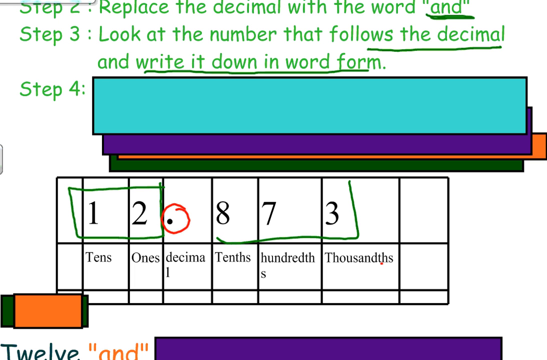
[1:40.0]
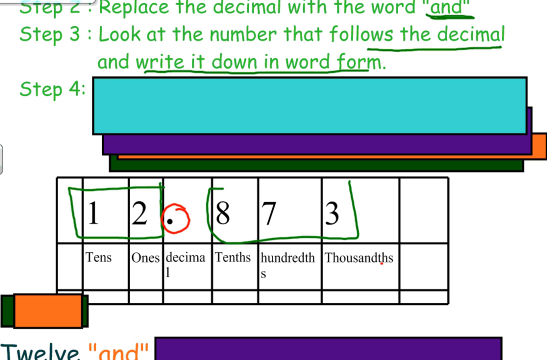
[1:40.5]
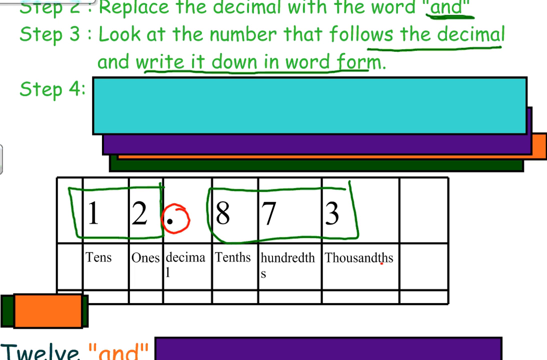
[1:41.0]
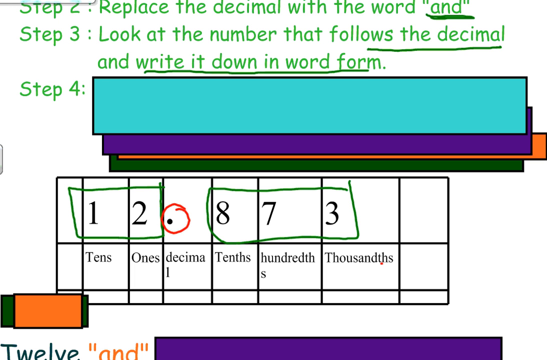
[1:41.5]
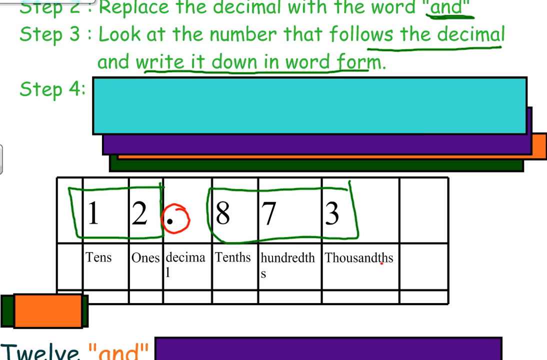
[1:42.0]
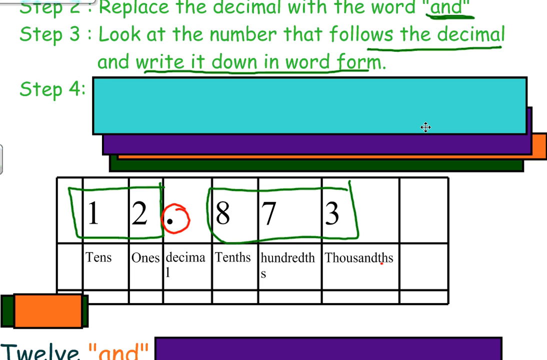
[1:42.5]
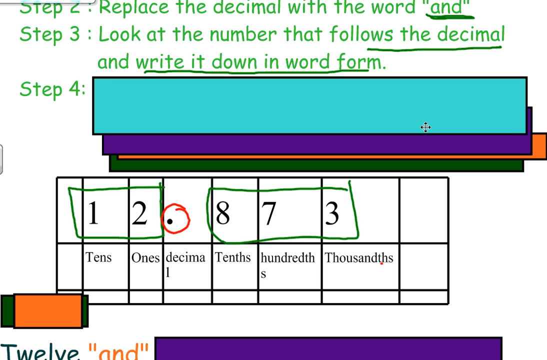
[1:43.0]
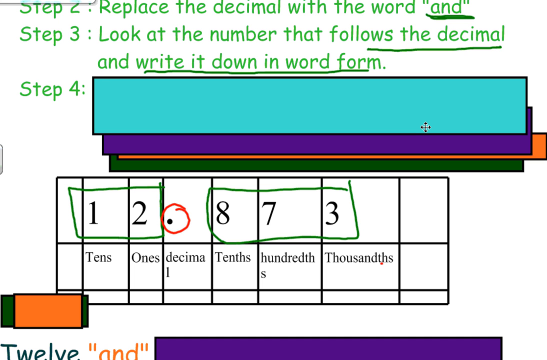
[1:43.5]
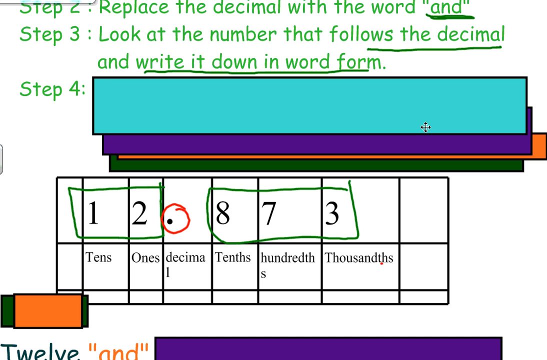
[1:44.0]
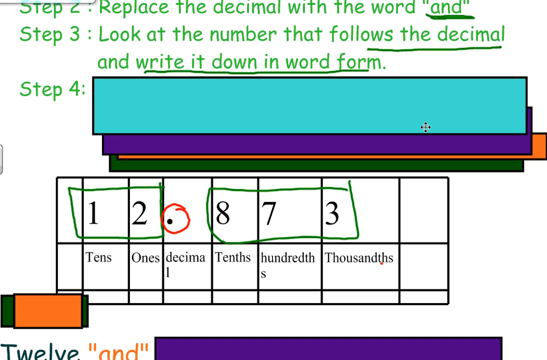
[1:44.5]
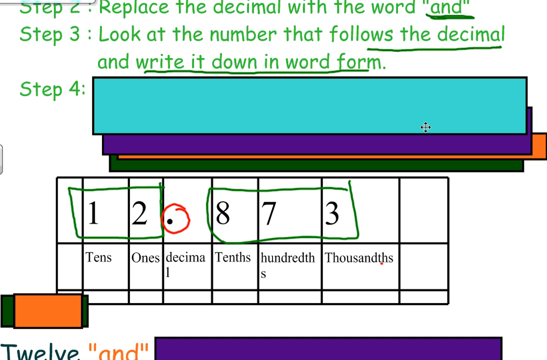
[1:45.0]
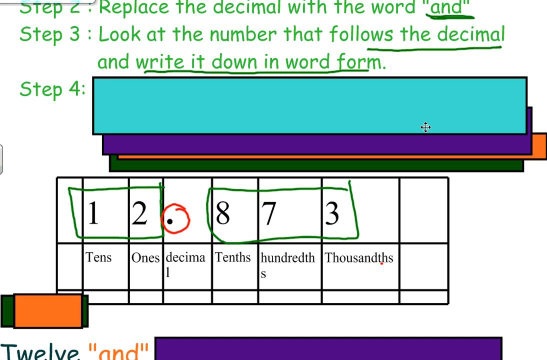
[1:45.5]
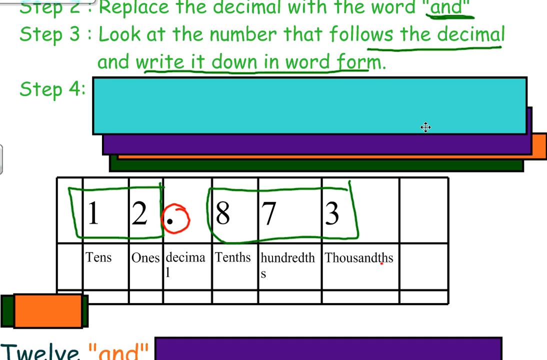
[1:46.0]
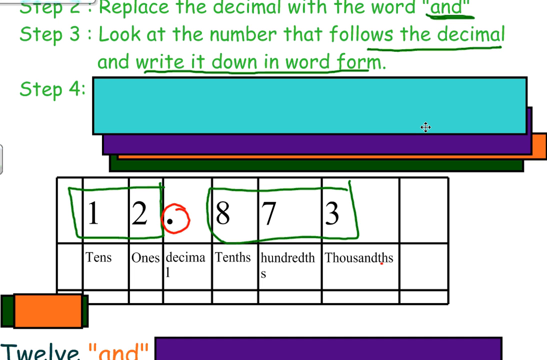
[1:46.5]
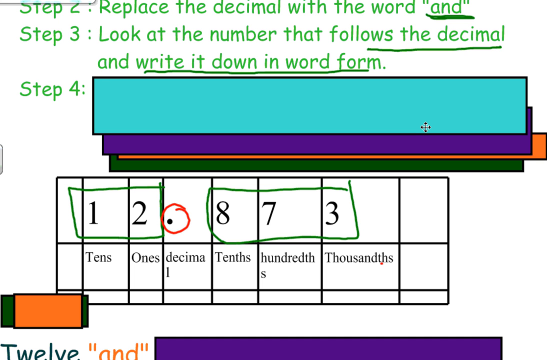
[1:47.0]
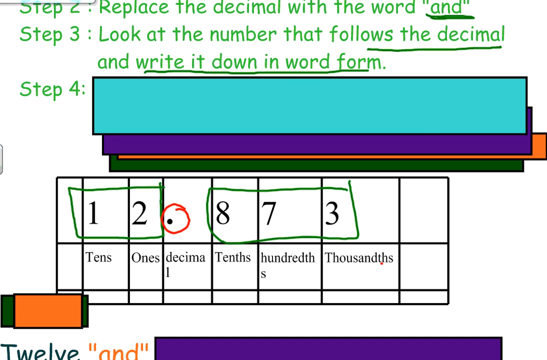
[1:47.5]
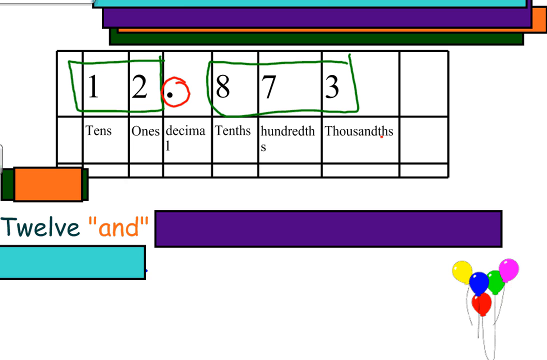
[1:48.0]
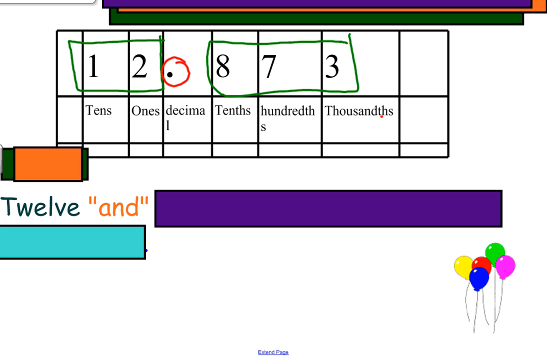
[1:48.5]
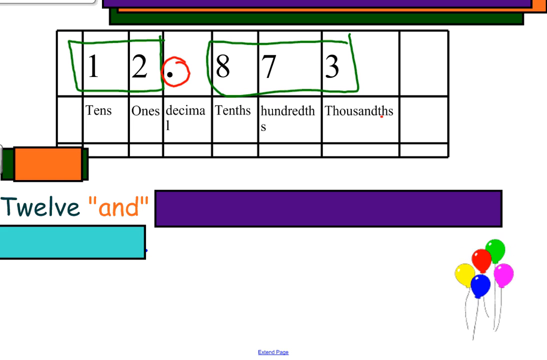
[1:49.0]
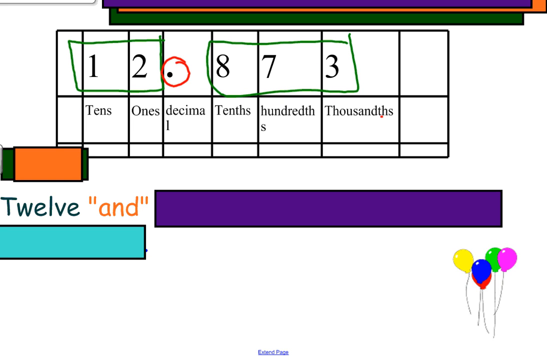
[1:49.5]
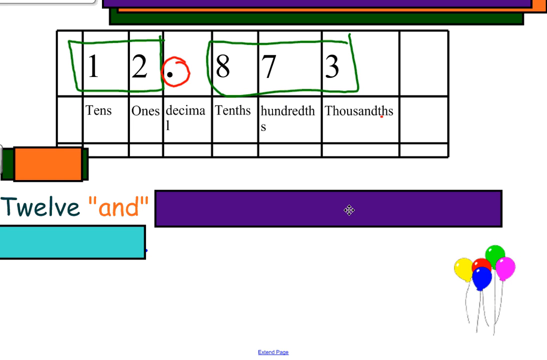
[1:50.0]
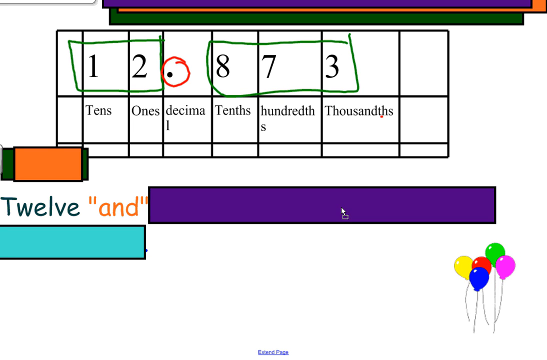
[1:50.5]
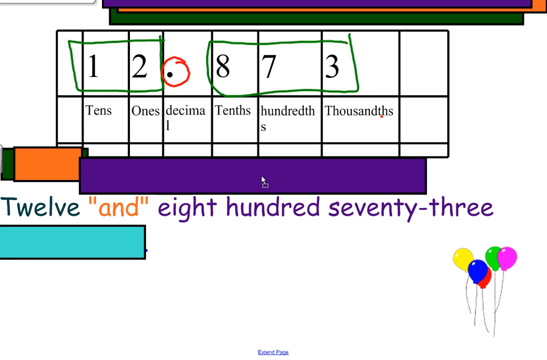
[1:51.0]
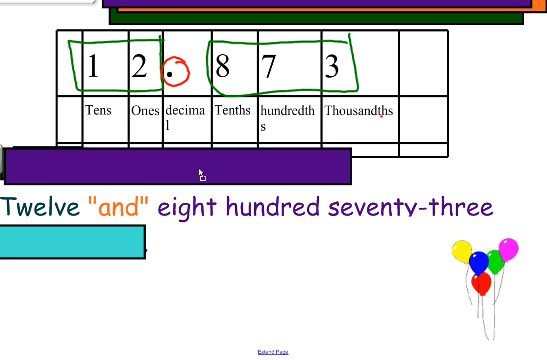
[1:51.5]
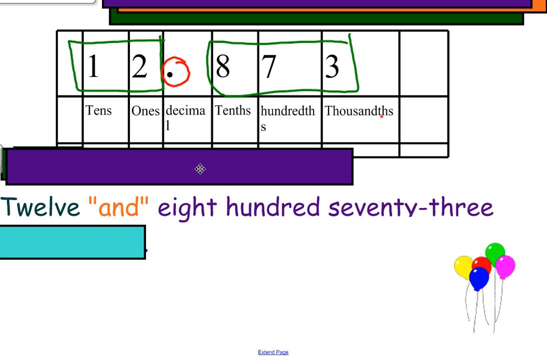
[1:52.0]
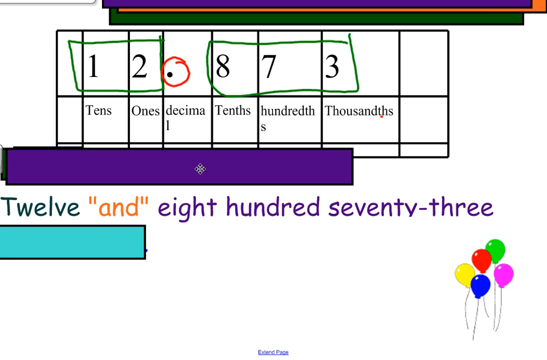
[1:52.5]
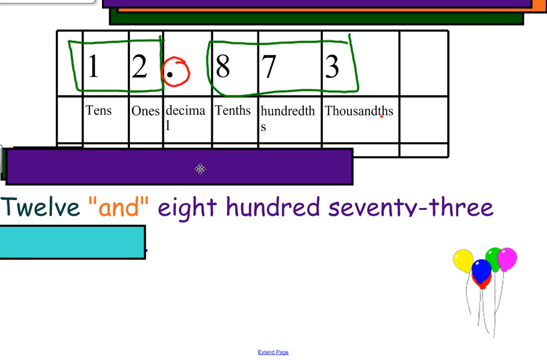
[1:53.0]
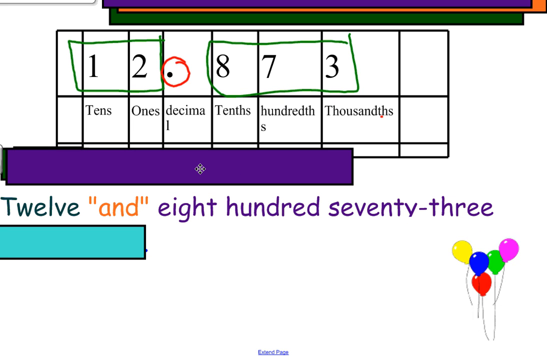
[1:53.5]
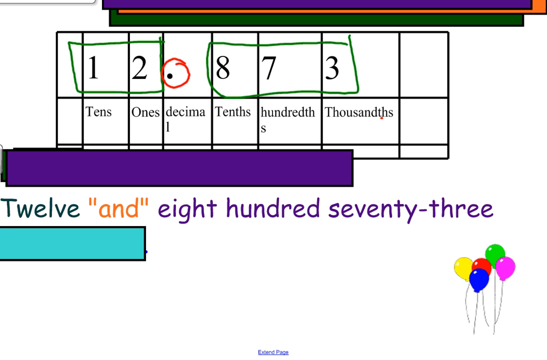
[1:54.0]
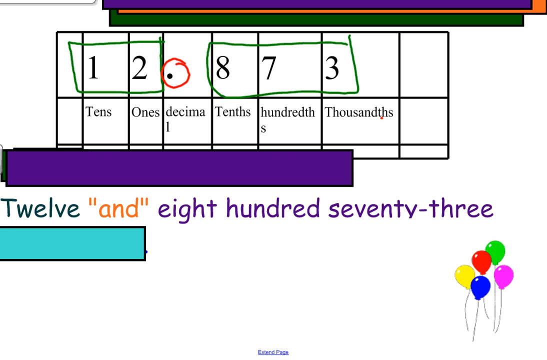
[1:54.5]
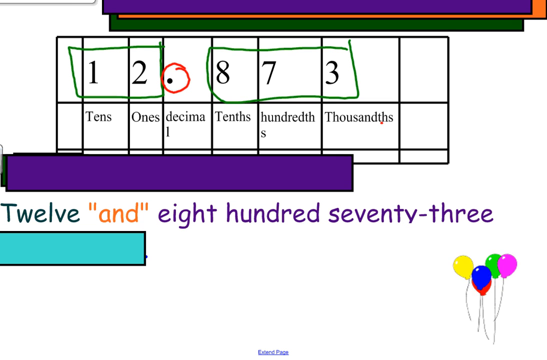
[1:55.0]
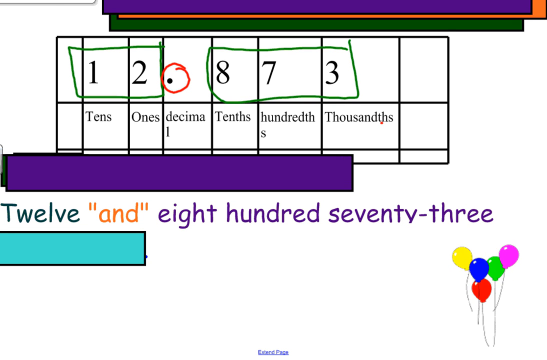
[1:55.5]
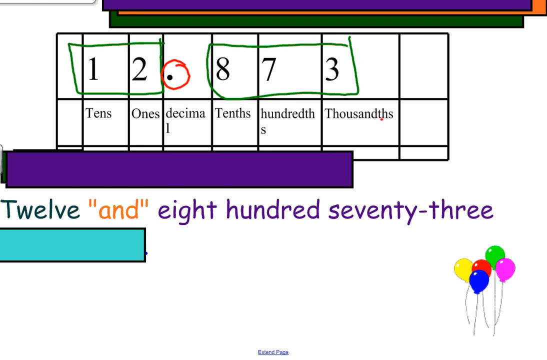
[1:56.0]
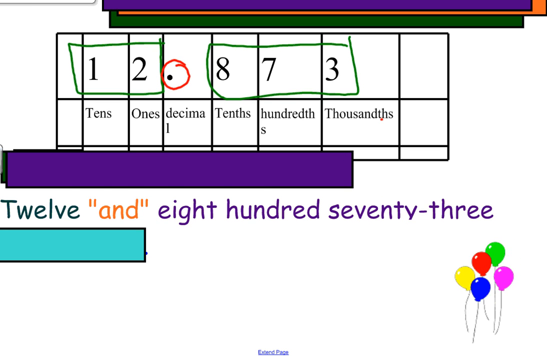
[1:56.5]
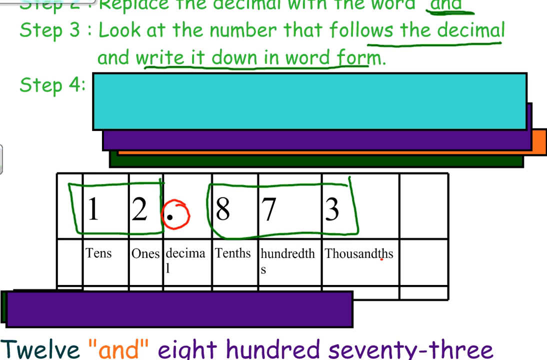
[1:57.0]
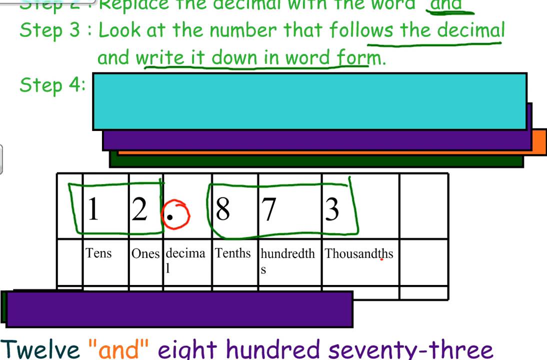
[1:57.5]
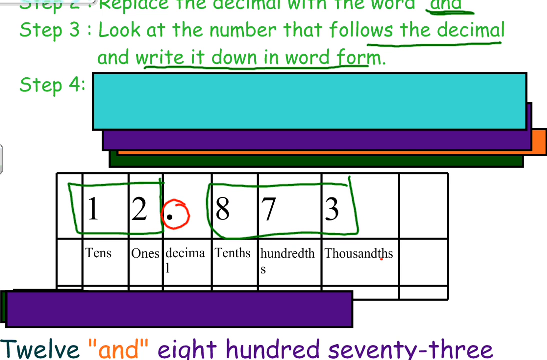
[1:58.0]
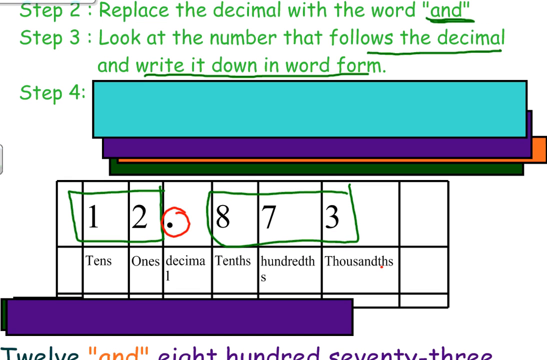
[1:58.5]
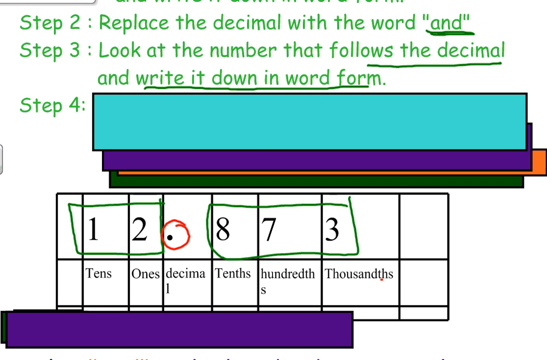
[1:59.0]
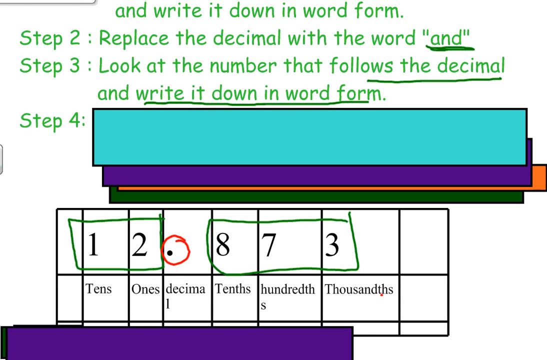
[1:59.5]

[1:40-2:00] The number after the decimal is changed into words, giving eight hundred and three.